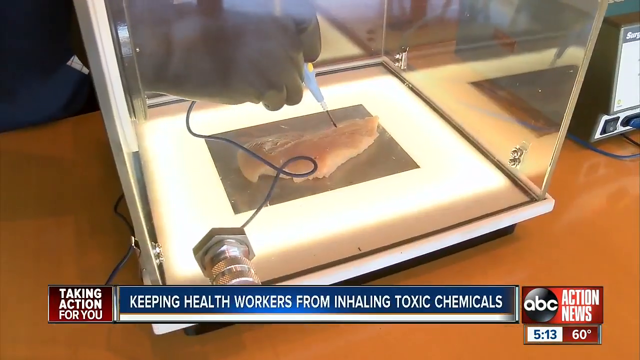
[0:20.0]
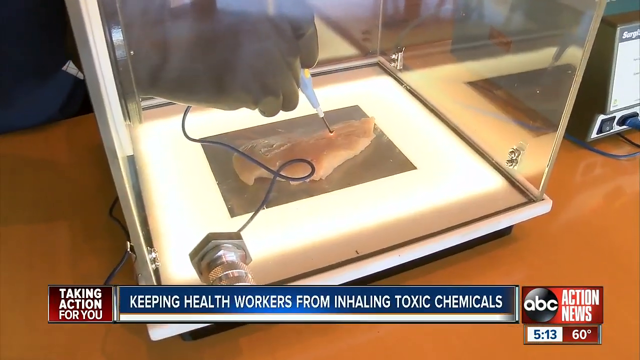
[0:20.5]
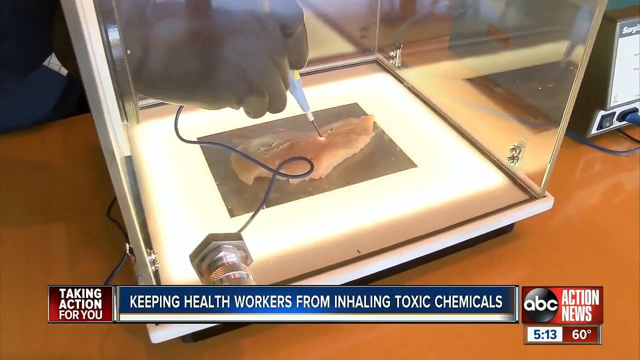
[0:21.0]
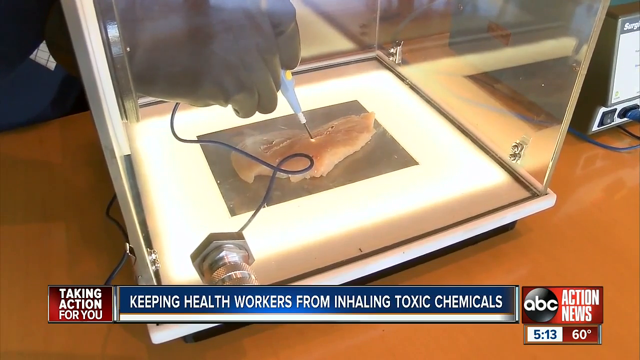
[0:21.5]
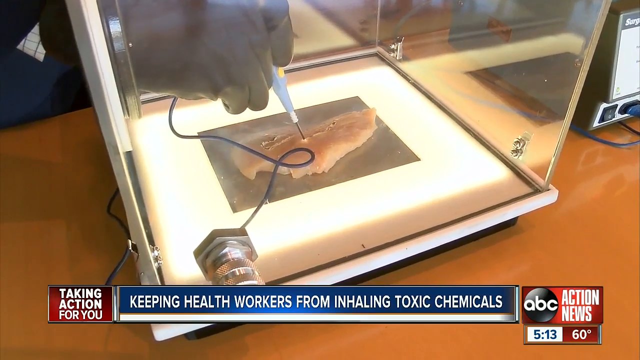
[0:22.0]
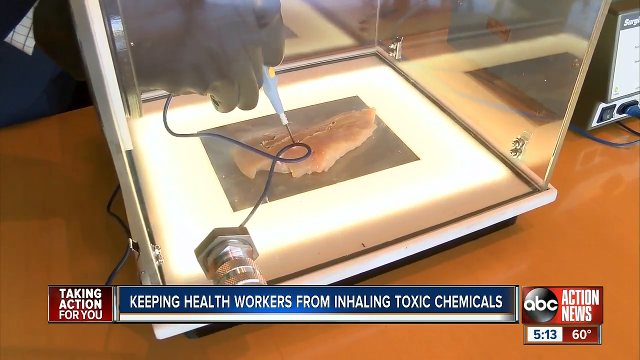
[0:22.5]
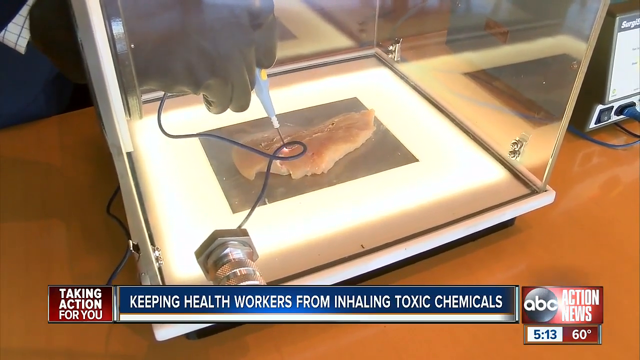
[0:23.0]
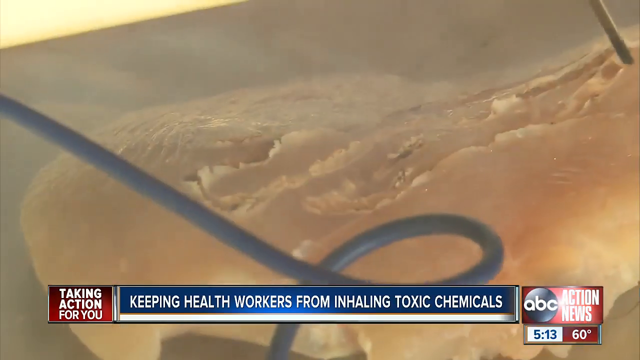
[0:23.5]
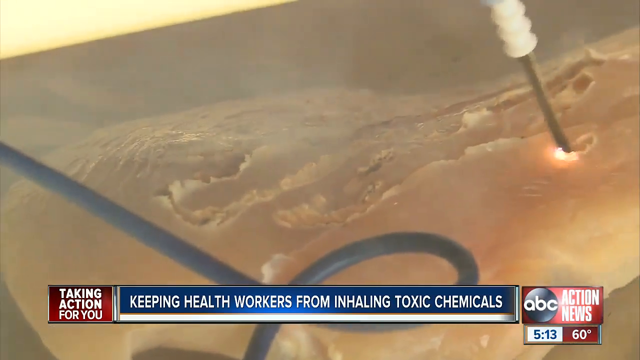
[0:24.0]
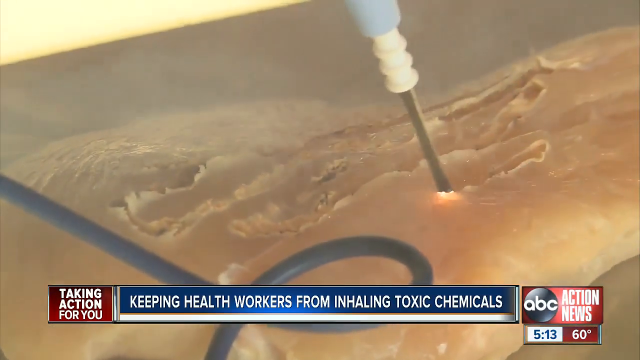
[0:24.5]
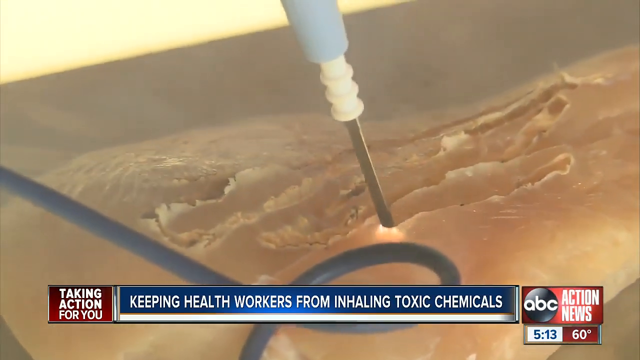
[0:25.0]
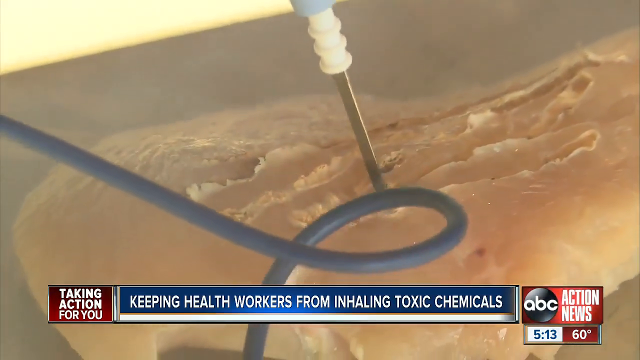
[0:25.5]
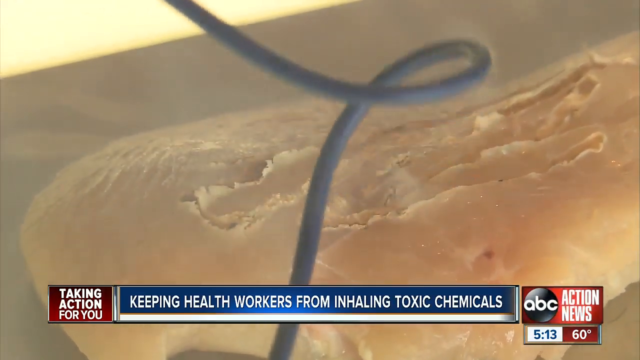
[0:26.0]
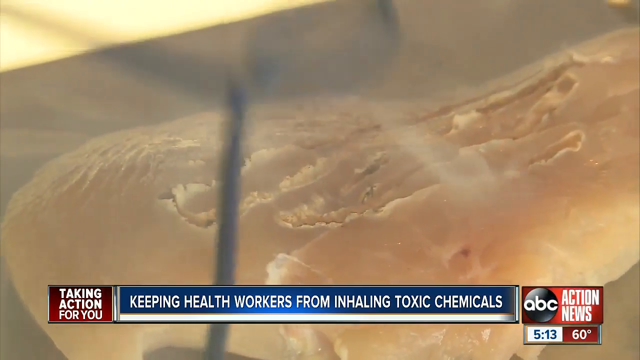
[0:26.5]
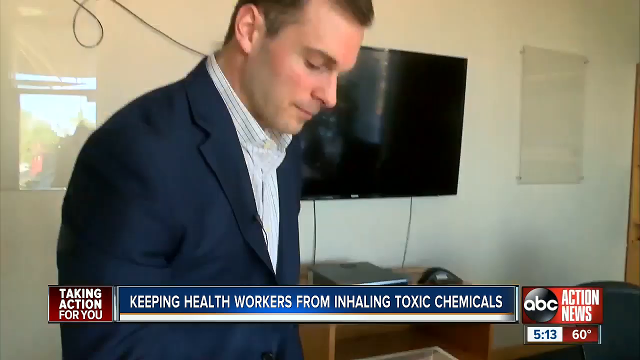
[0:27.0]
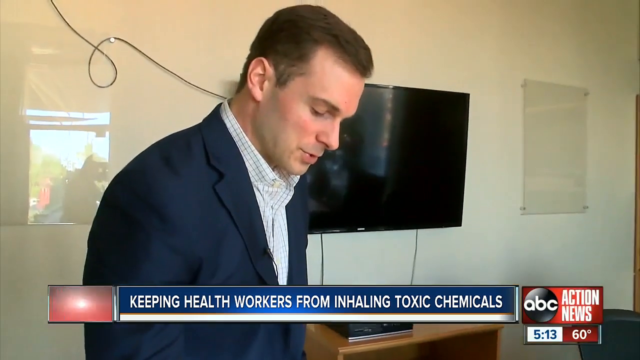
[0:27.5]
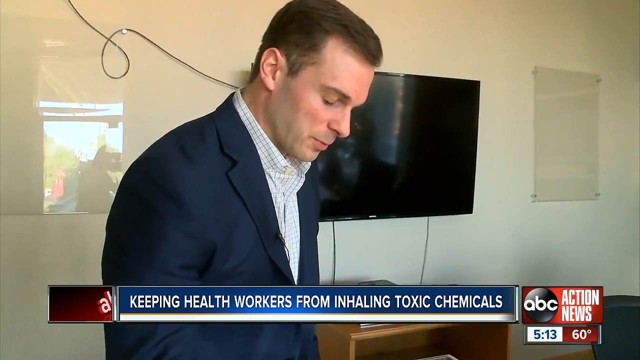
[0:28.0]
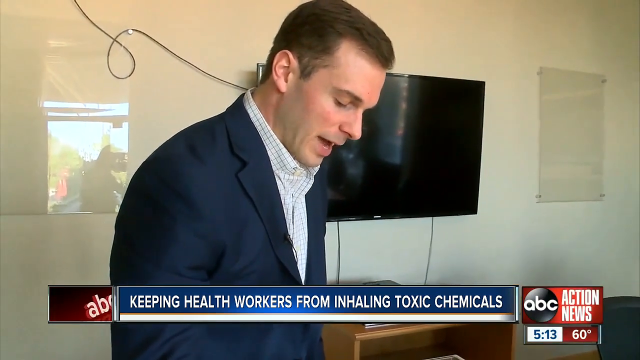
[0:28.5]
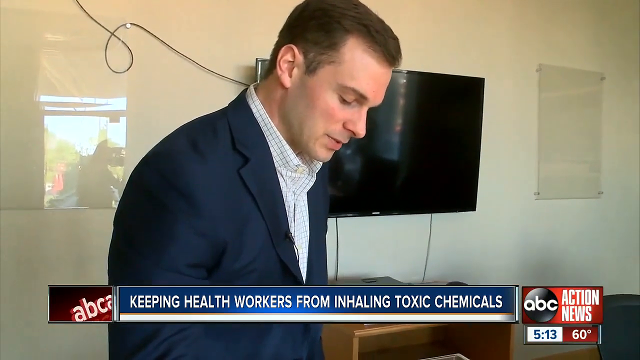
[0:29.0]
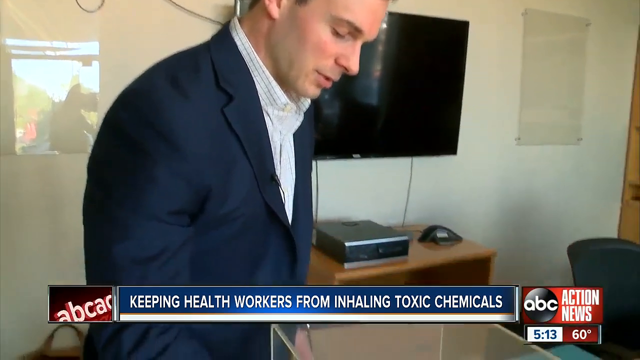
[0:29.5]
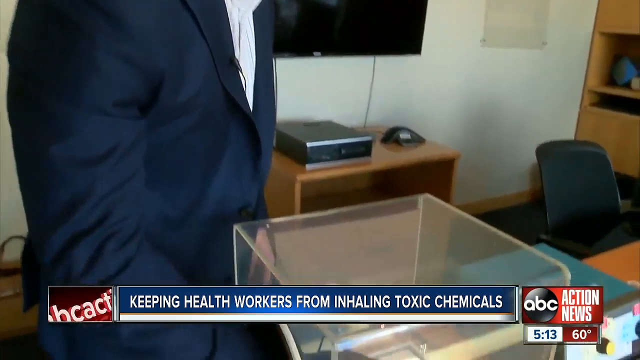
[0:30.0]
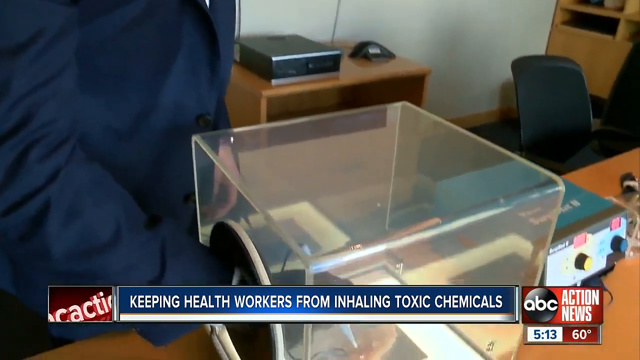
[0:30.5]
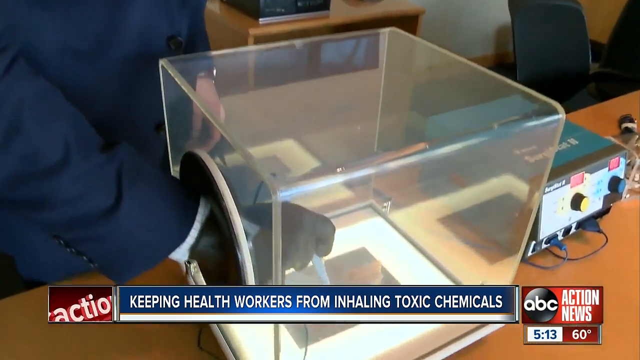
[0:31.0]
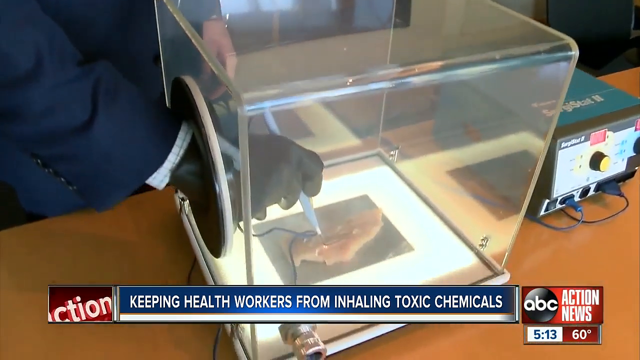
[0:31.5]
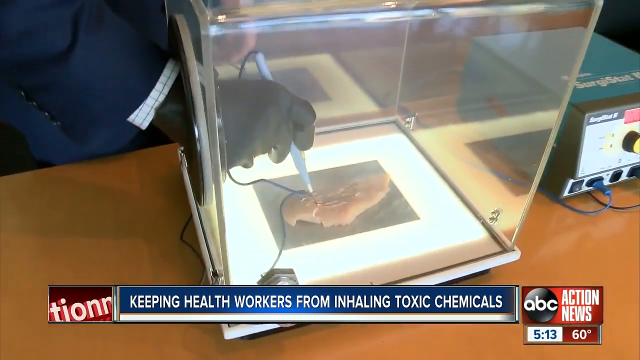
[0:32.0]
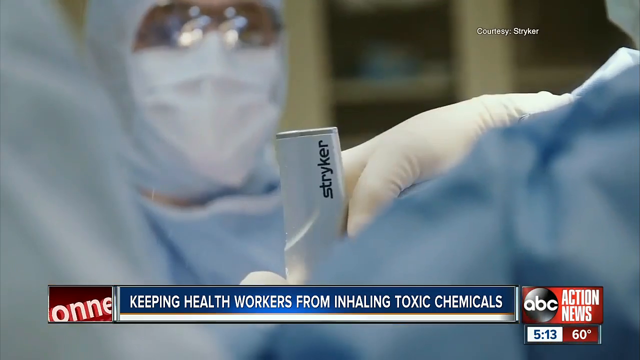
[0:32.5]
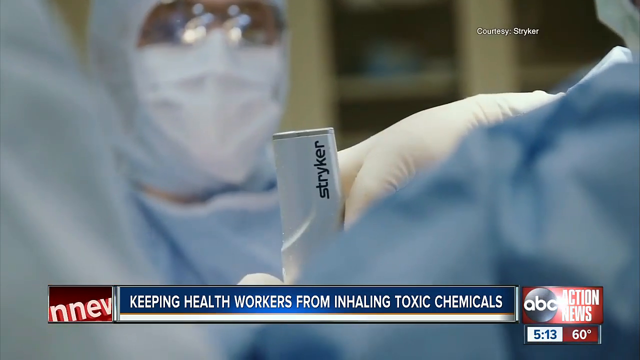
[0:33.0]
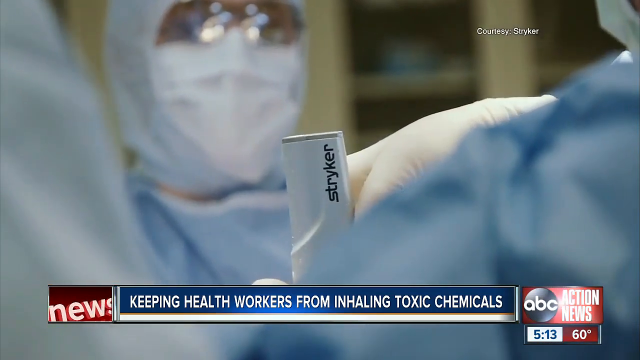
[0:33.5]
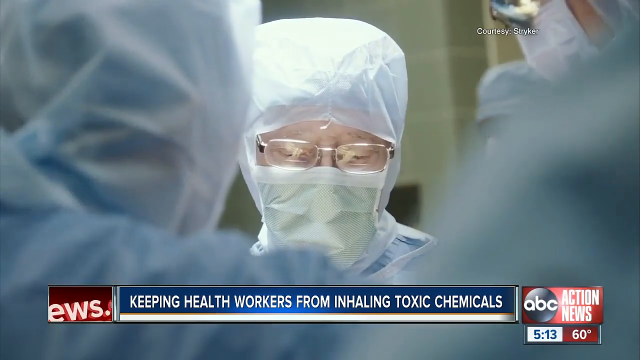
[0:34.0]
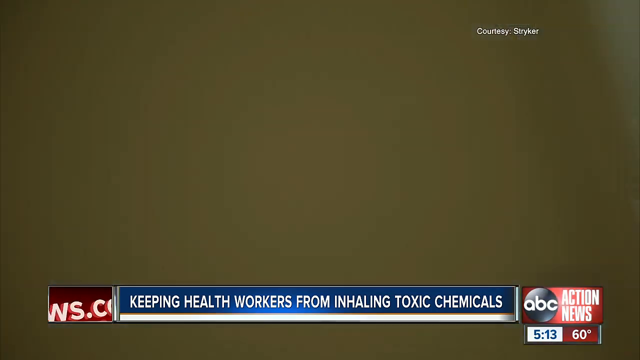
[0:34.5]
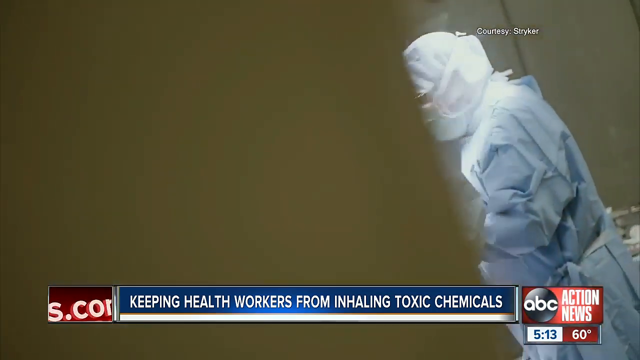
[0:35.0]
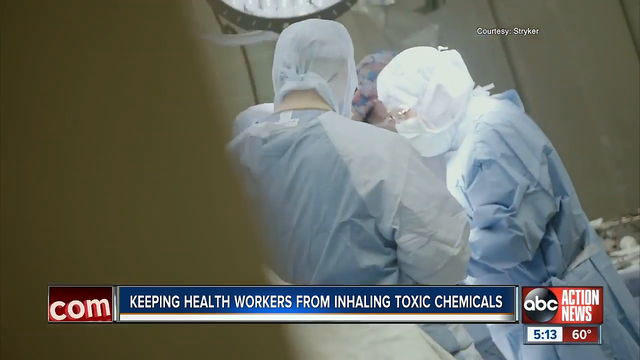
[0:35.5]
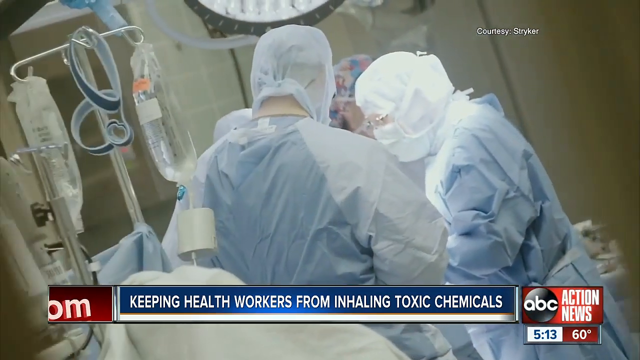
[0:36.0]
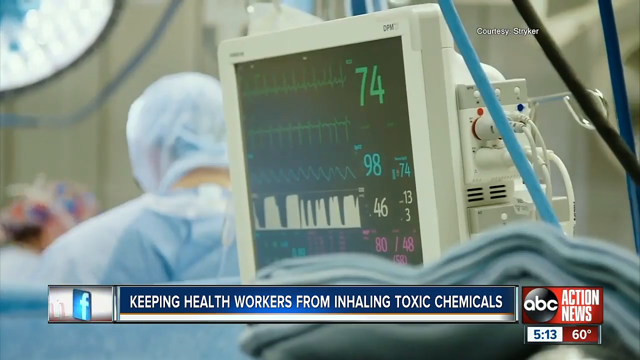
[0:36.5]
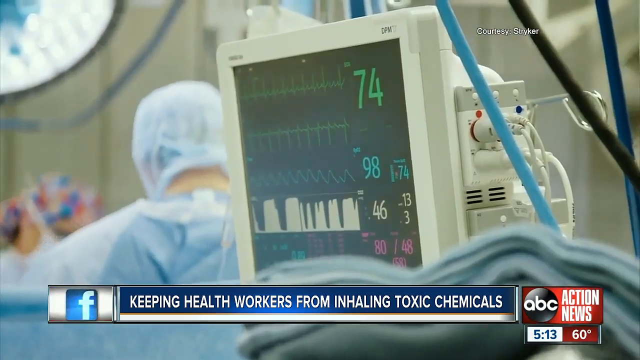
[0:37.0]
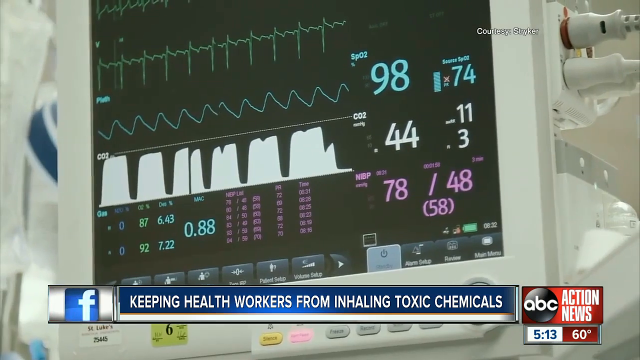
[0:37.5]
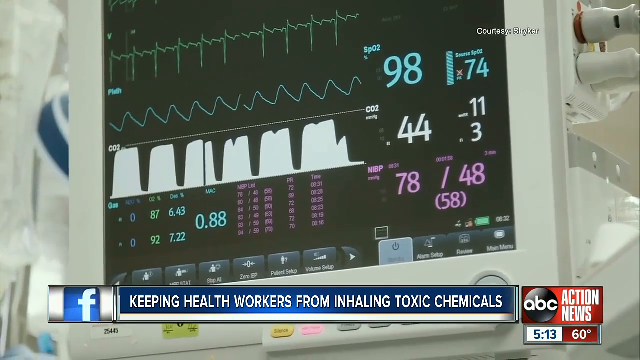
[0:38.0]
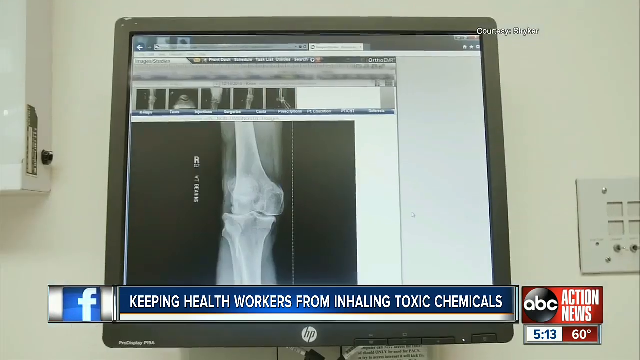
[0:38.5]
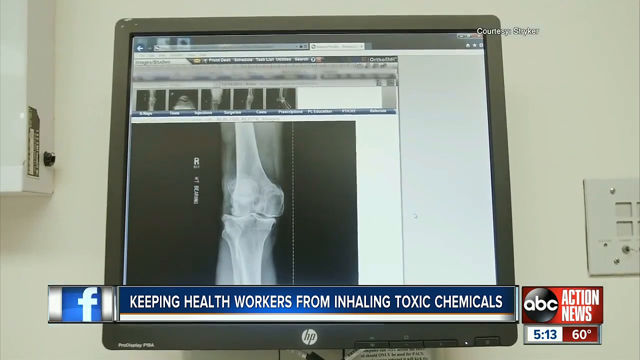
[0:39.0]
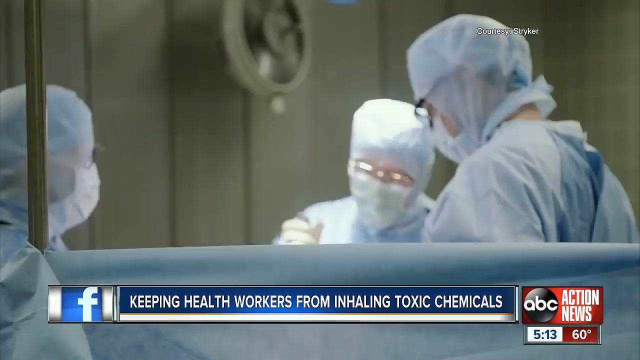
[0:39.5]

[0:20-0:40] A person uses a tool on a piece of tissue inside a clear box, with a hand in a black glove shown inside. The person is a white man wearing a blue jacket as he does the experiment, and a needle is used to pierce the meat or tissue inside the box. The man wears a dark suit, and text at the bottom reads "keeping health workers from inhaling toxic chemicals." The setting is an office with a small machine on a table and brown tables. The video shifts to a hospital, where doctors wear glasses, blue gowns and head coverings. A BP machine records the heartbeat as the doctors operate on a person, and a screen shows a fractured bone.